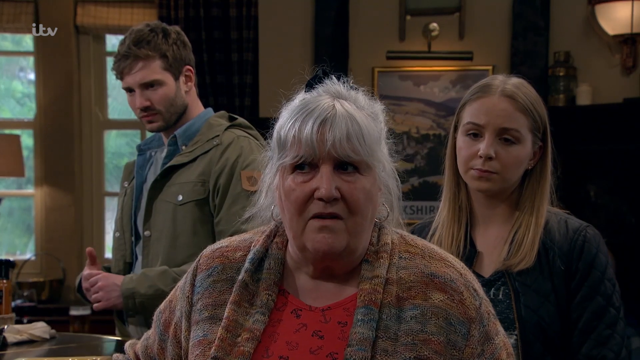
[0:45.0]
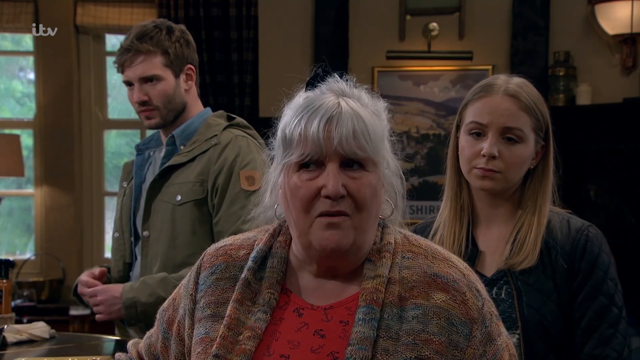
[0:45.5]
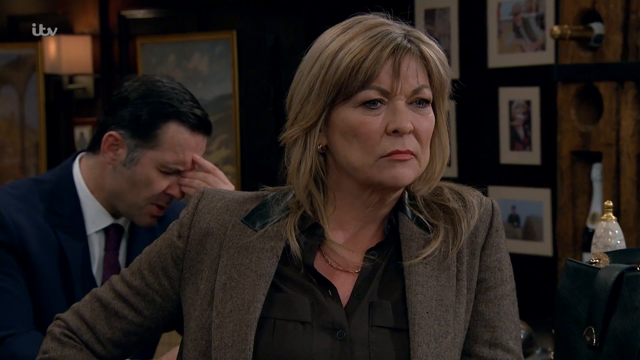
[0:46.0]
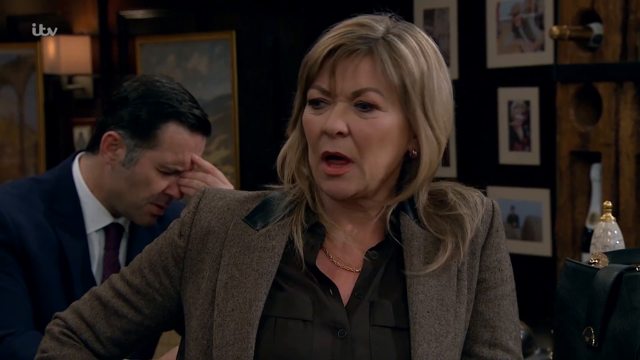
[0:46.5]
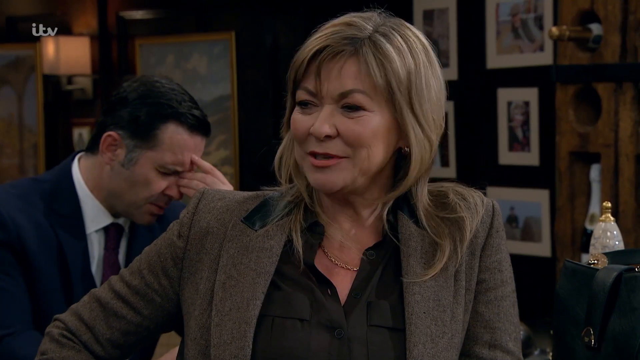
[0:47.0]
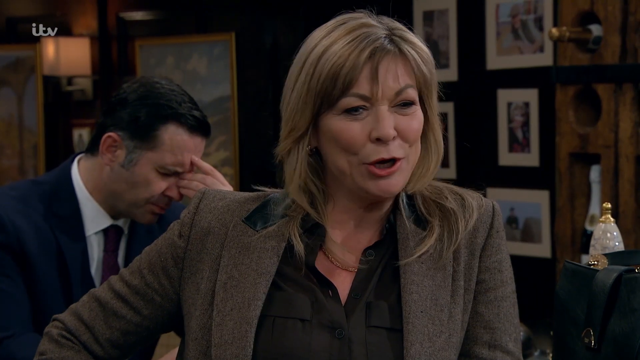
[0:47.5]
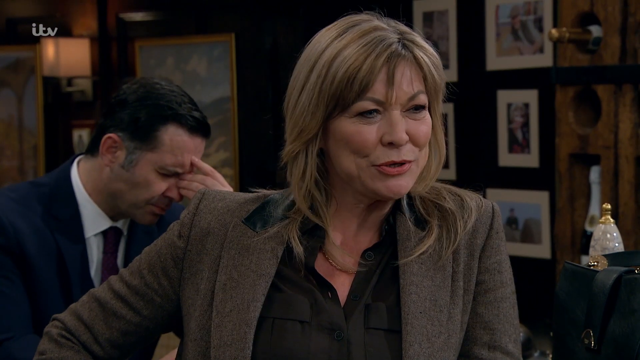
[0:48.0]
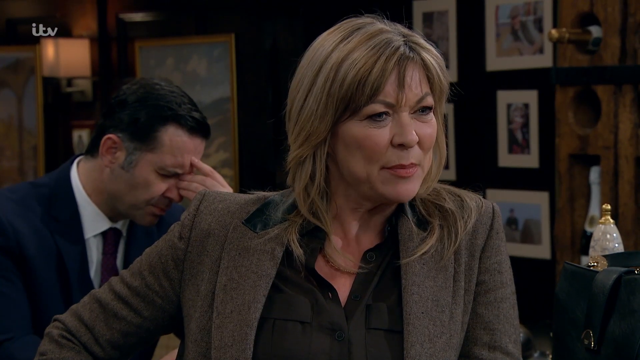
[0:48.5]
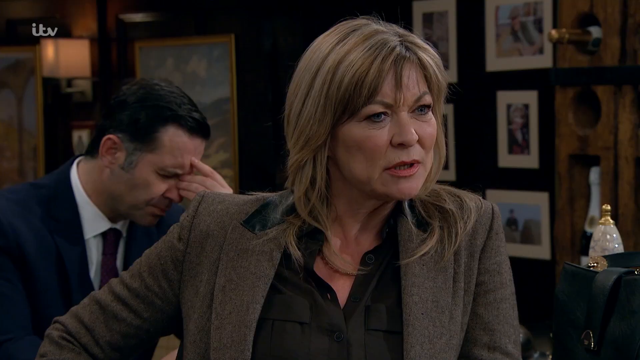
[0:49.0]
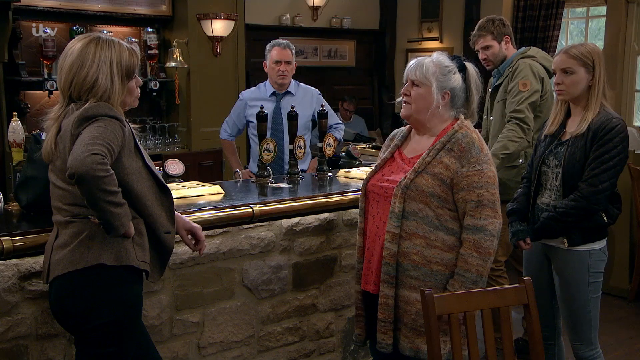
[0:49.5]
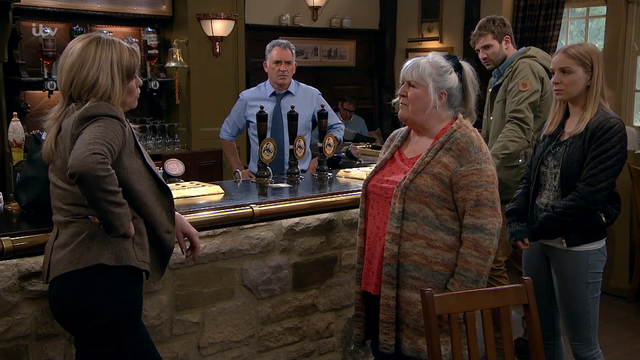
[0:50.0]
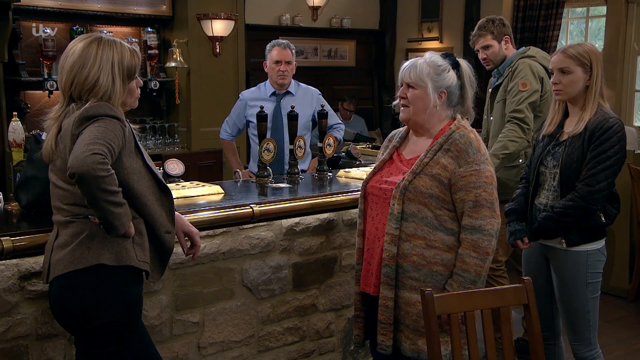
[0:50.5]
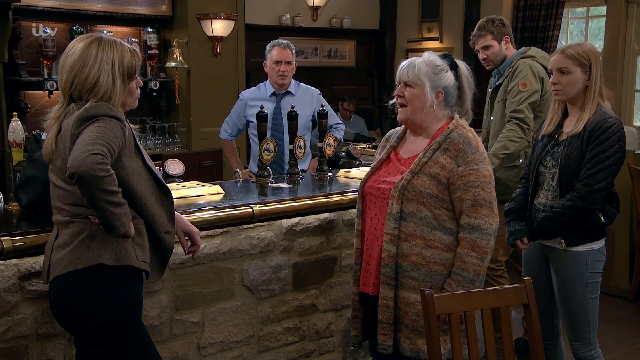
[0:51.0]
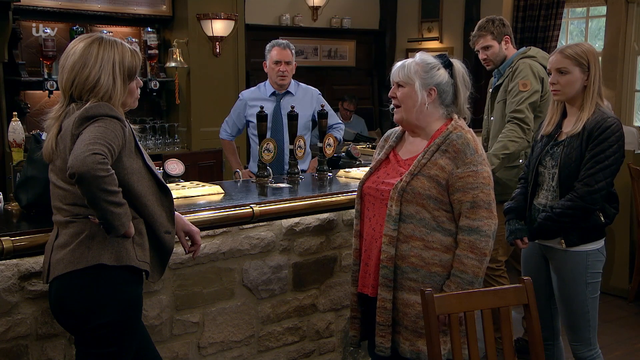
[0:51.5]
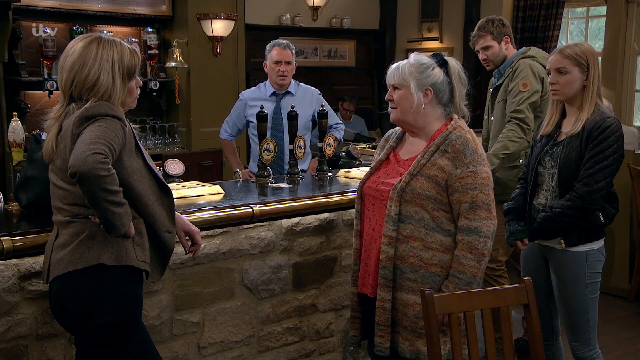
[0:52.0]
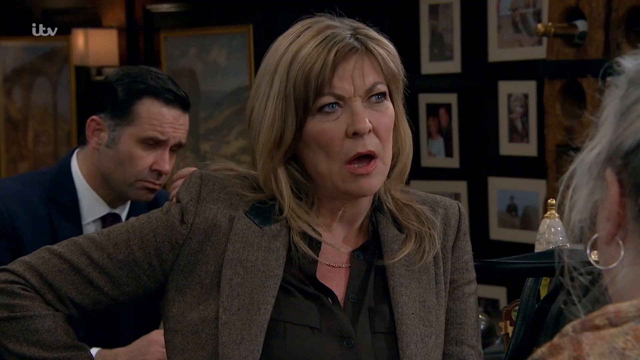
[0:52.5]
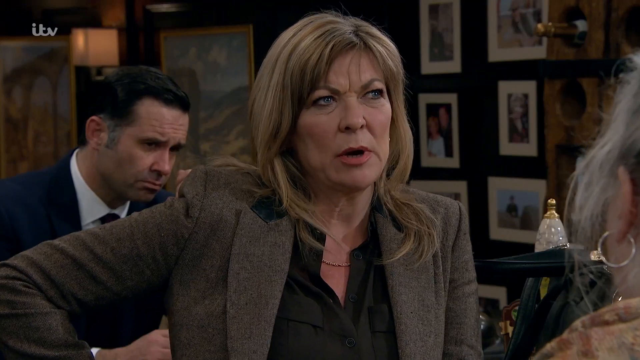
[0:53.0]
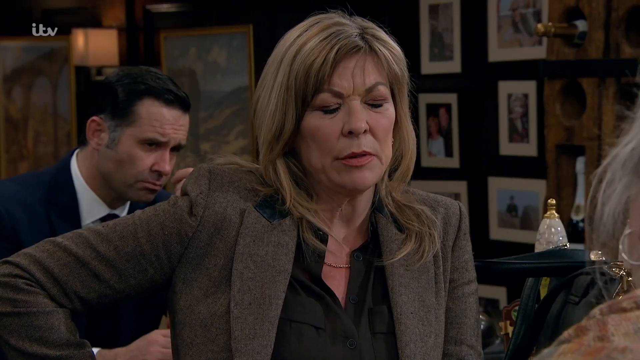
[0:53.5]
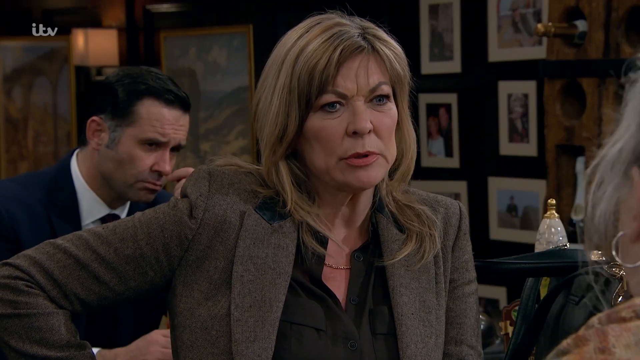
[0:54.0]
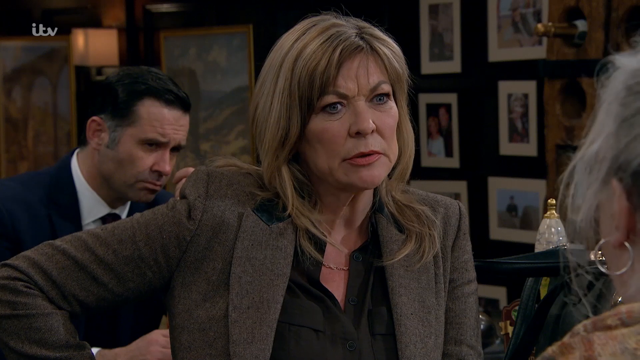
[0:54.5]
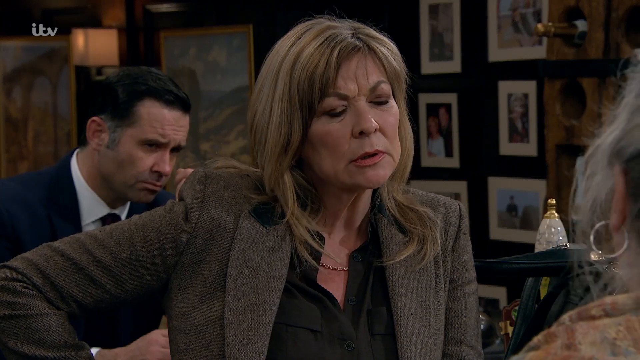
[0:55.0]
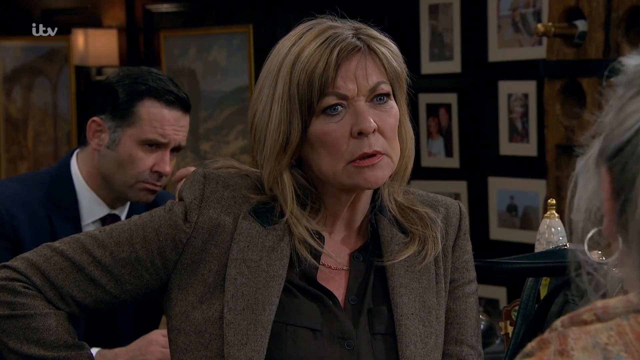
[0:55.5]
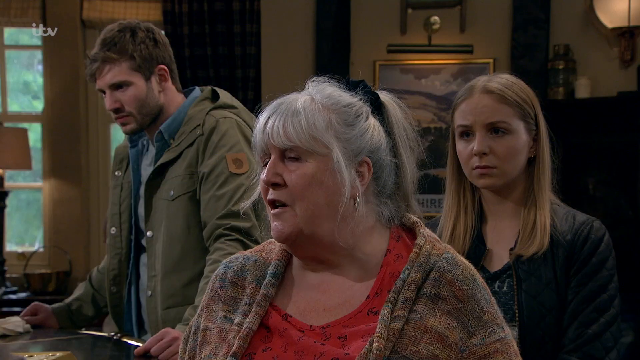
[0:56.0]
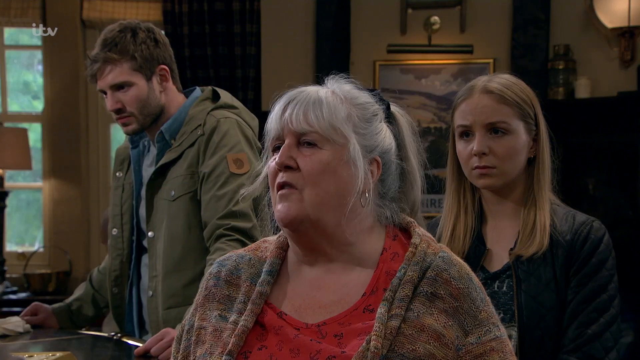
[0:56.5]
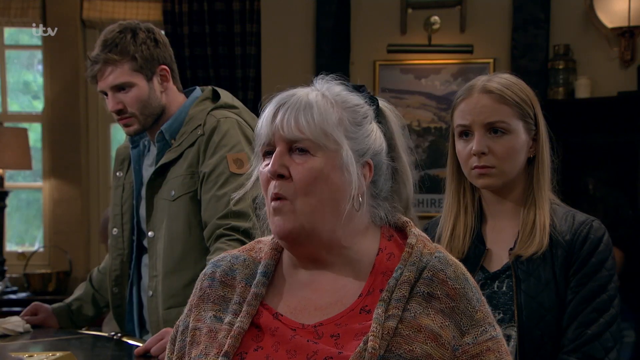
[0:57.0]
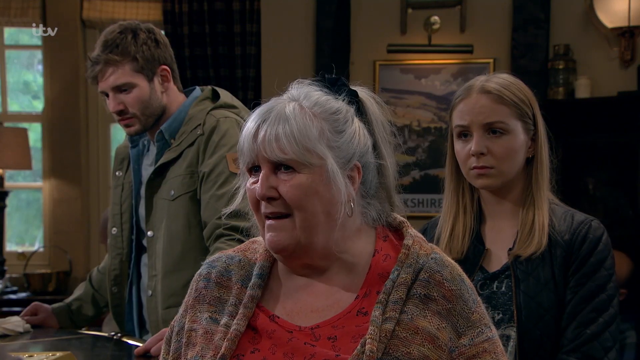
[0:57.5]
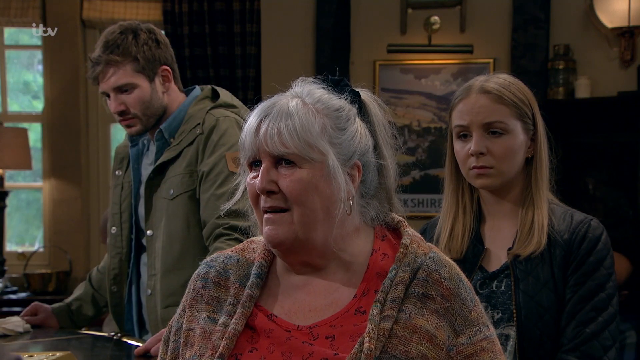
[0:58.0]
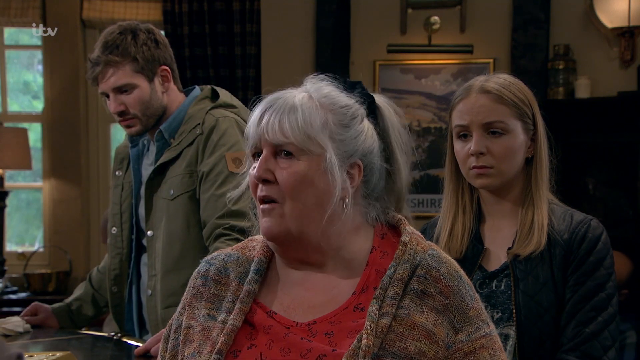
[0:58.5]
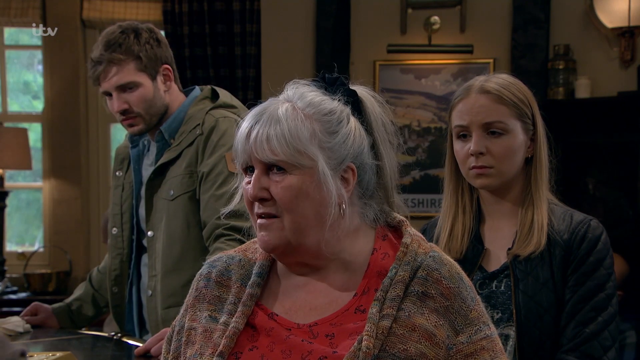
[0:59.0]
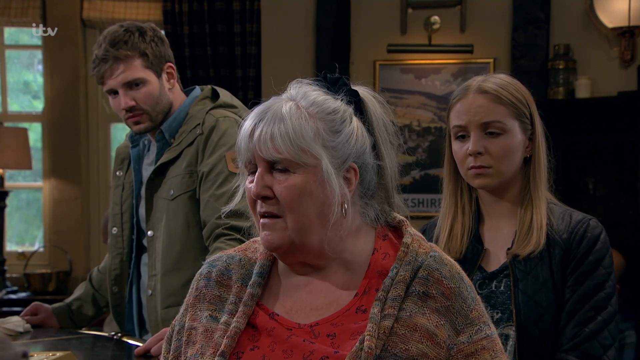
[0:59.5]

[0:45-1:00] The older lady is still talking to the other woman, who looks to be in her mid-50s, with brownish-blondish hair and a necklace. Behind the older lady are two people, the younger woman with blonde hair and the man with the beard. A man in the background is still pinching his nose, and the bartender is there as the two women talk. The shot is a close-up of the older woman talking, then it focuses on the woman in her 50s talking, then it pans out to the people in the bar: the older woman, the woman in her 50s, the younger woman, the man, and the barkeep. As it pans in on the woman in her 50s, a man in a blue button-up and blue coat is behind her.